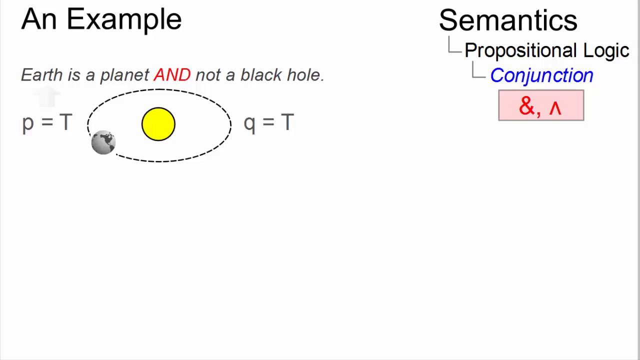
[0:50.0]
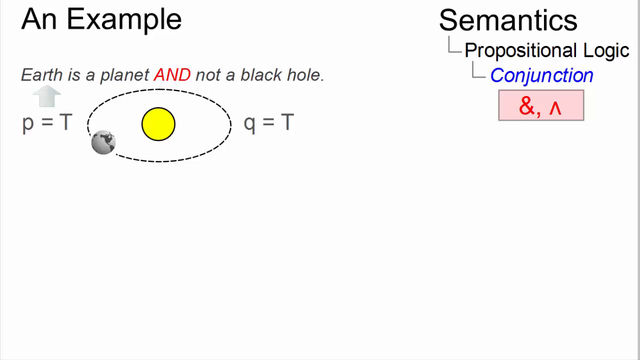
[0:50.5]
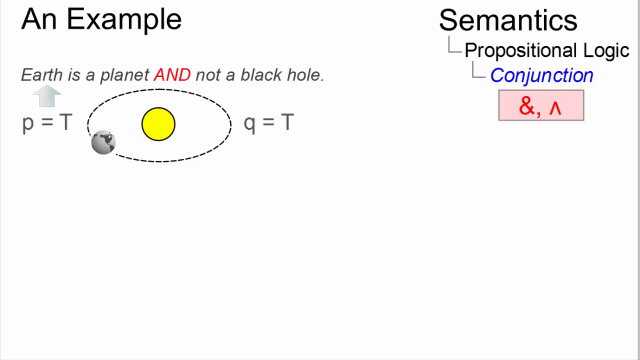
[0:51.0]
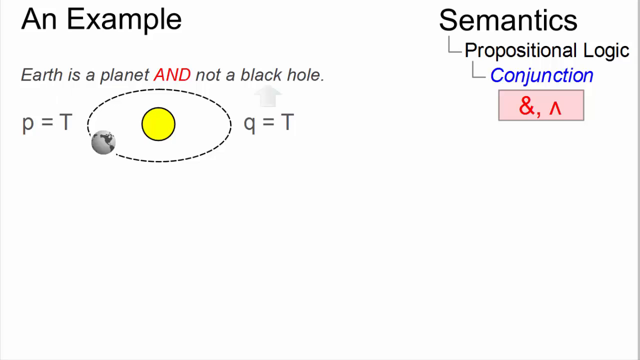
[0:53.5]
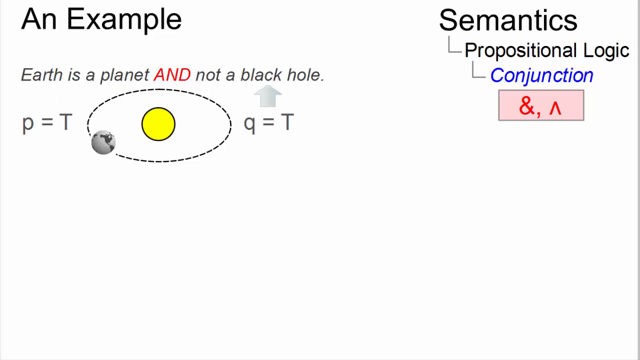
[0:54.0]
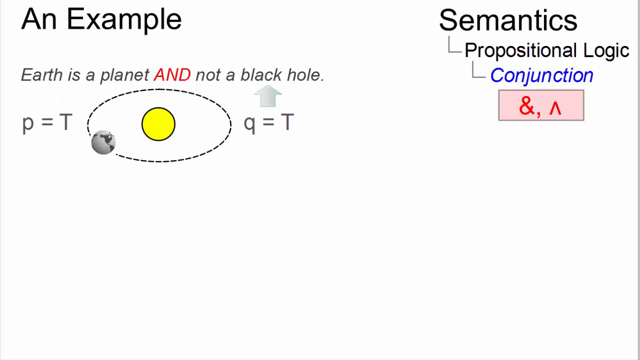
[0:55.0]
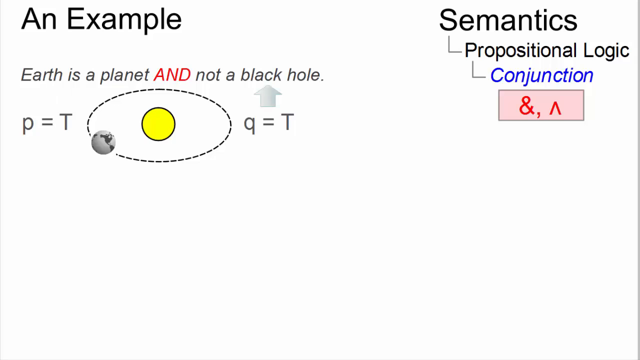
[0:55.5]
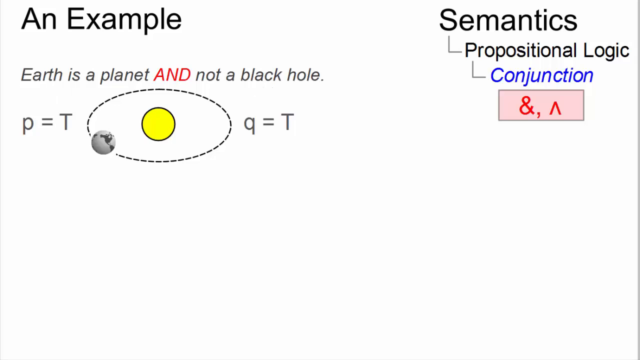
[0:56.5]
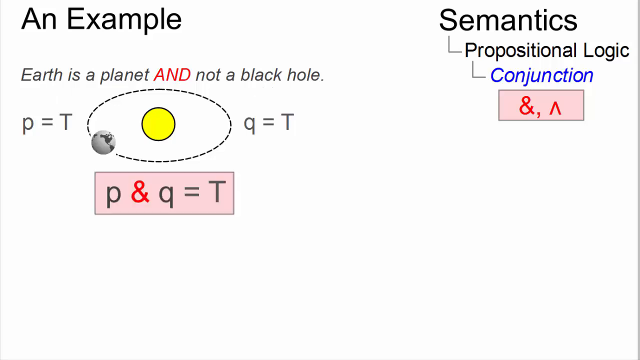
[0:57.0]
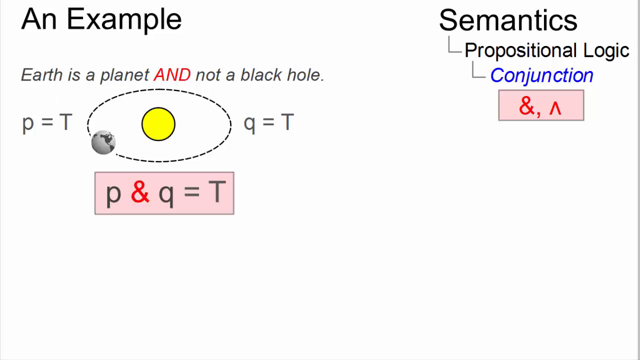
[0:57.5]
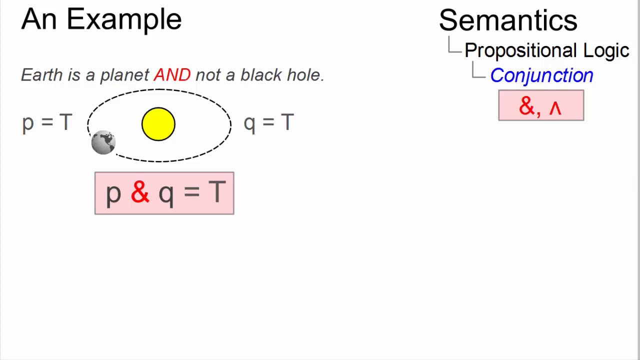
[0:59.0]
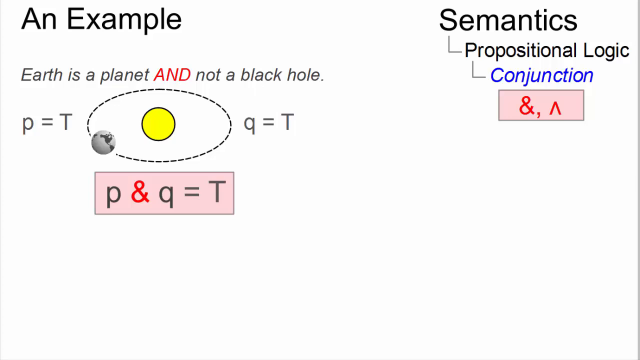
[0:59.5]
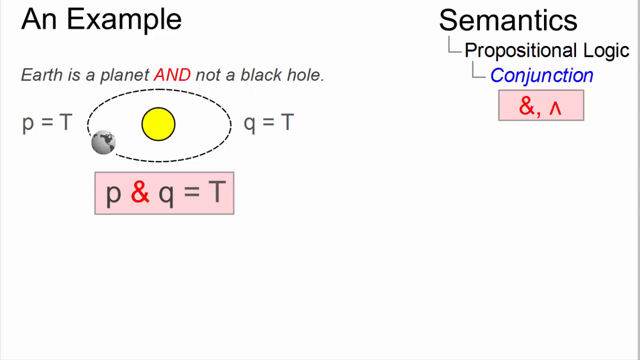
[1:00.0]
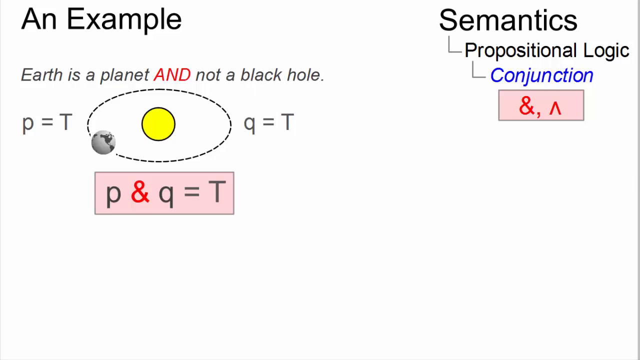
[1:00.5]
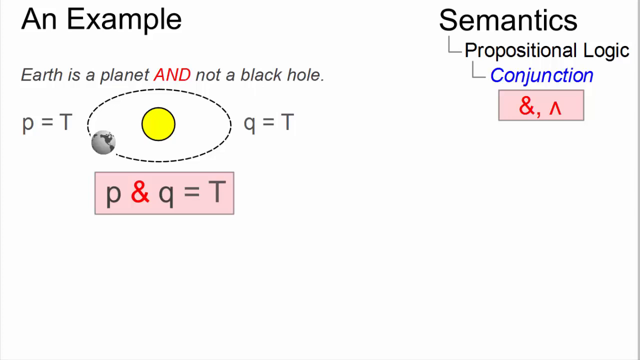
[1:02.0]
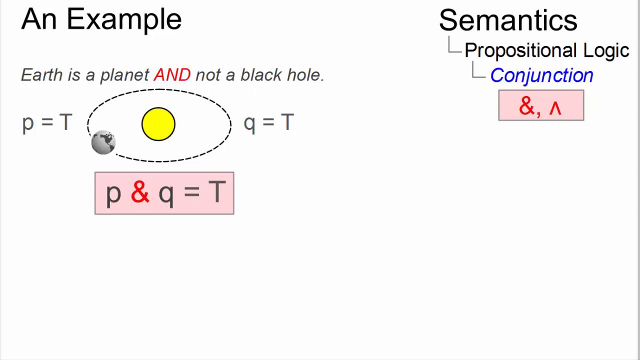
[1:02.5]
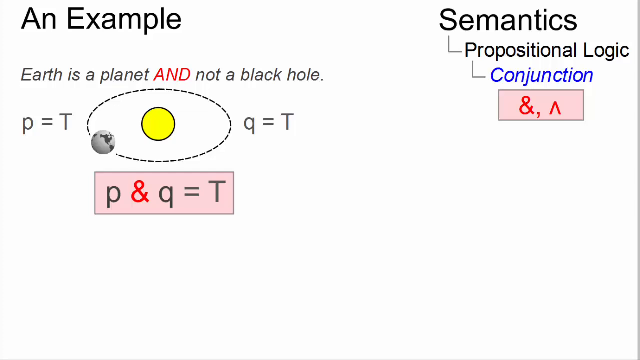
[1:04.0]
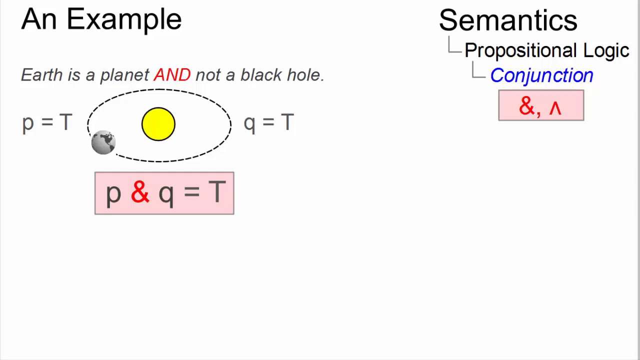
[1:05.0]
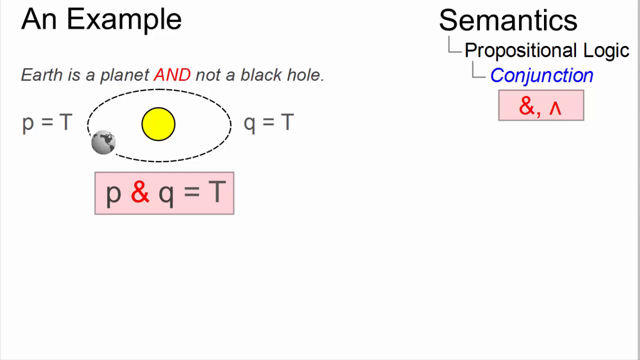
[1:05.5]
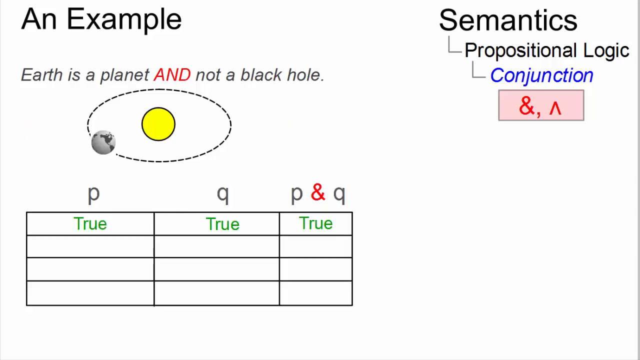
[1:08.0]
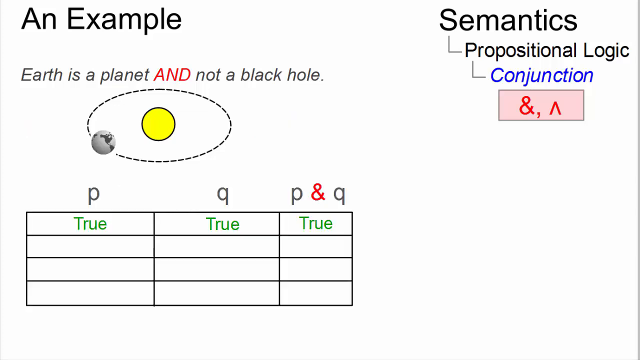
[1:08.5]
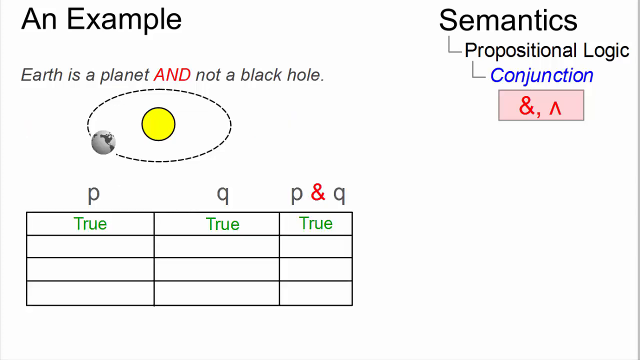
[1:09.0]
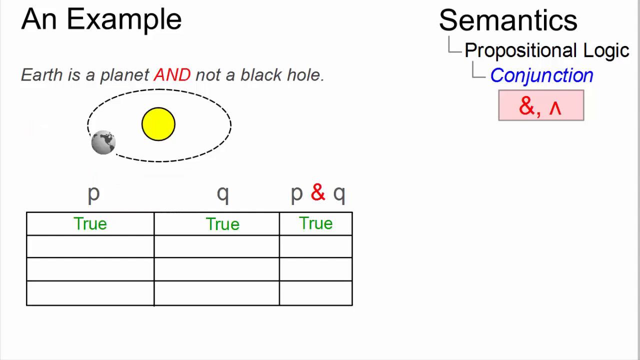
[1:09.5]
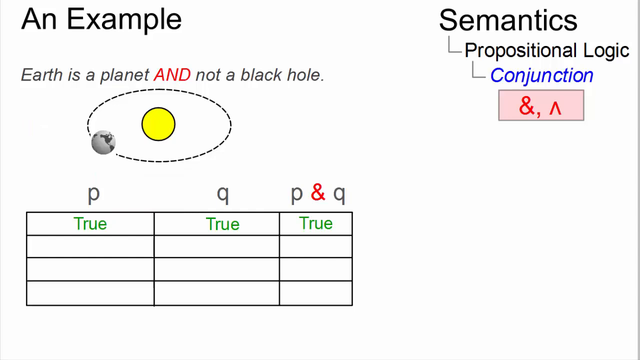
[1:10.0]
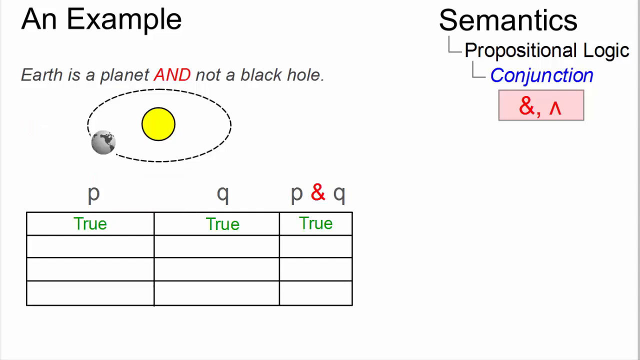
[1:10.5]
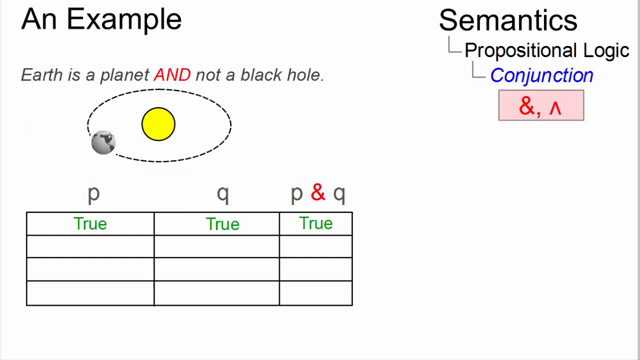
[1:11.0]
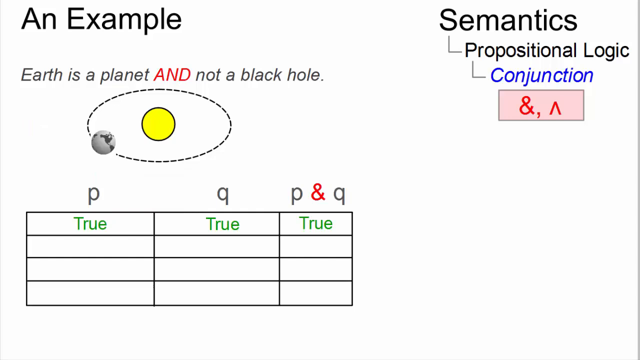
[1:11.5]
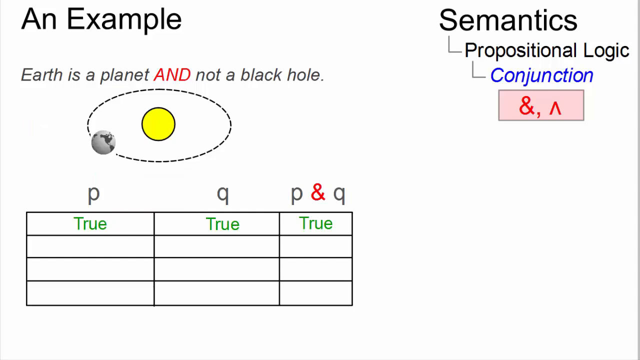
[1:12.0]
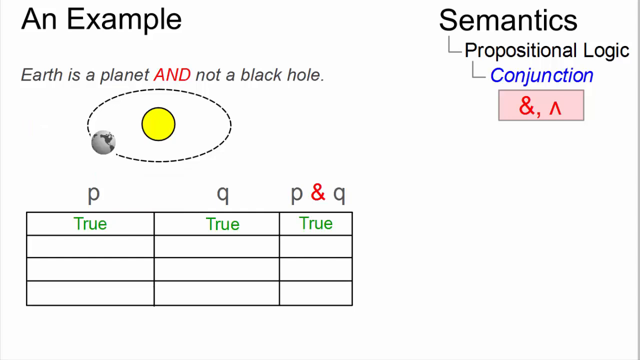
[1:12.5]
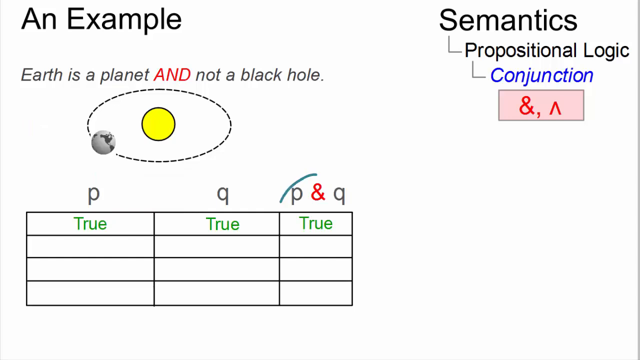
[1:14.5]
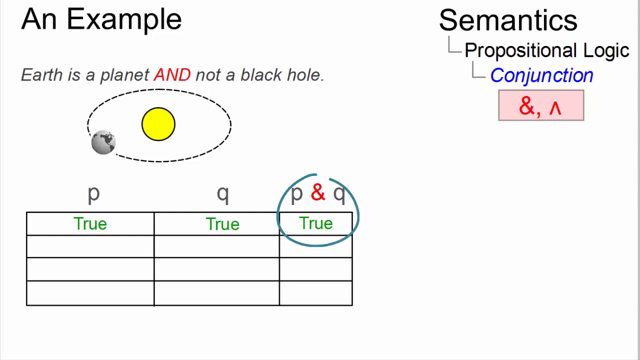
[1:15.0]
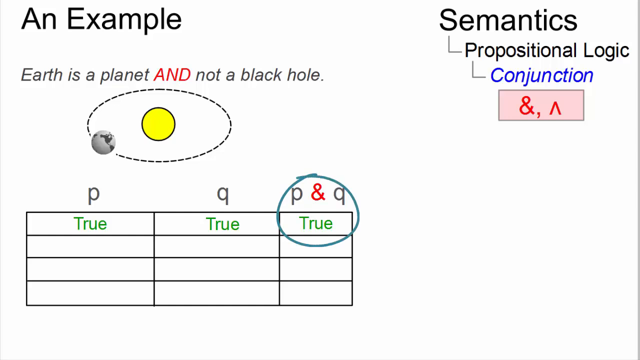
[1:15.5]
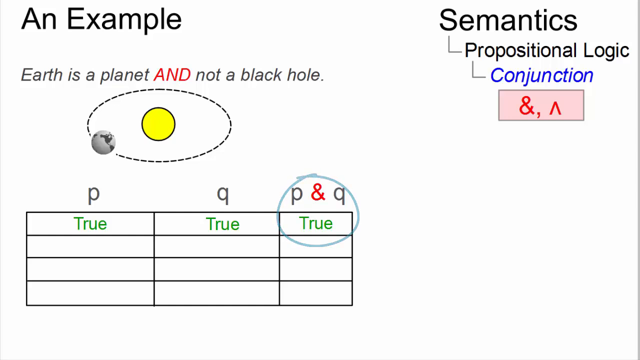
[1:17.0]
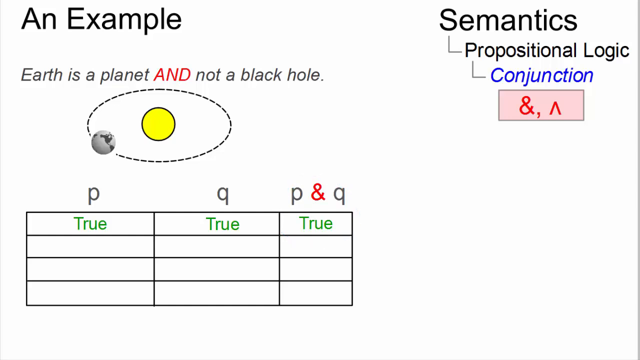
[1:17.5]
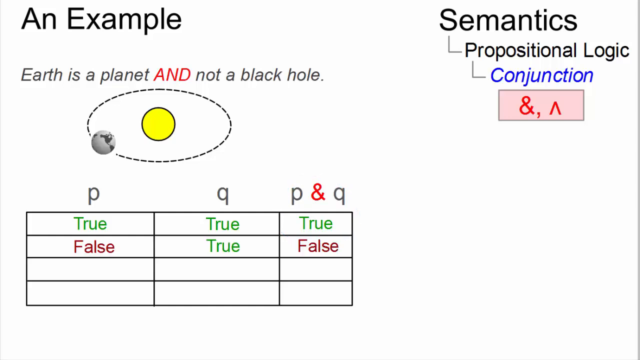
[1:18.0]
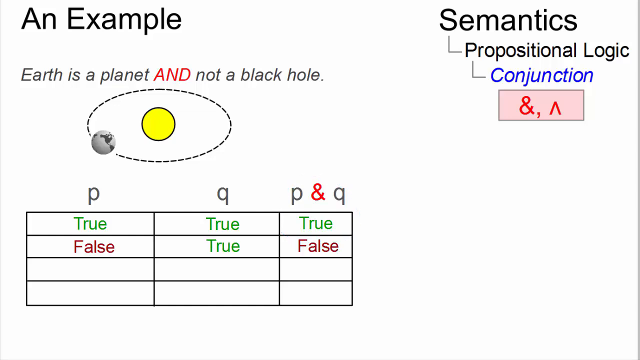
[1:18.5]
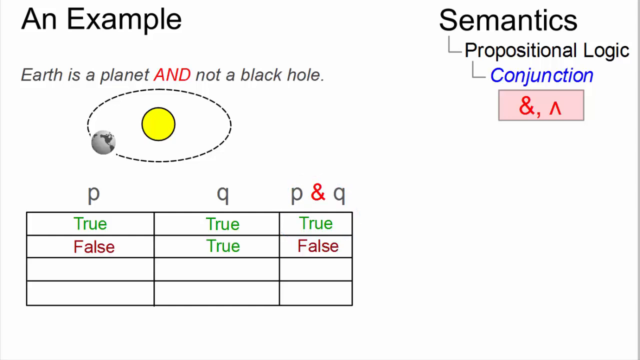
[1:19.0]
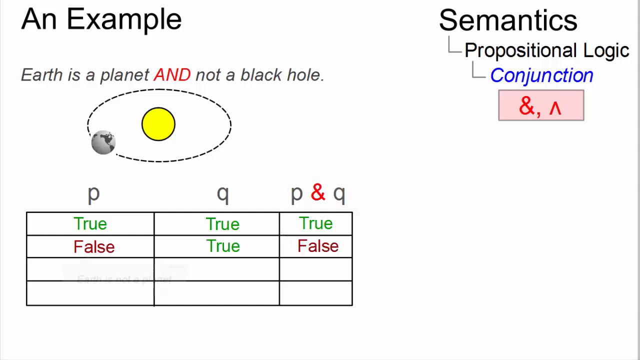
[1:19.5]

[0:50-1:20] The white background fades to gray and then to black at the bottom, about an inch up, and is outlined in dark gray along the right side from the bottom right corner to the top right corner. The example "Earth is a planet and not a black hole" is shown. A bright yellow object depicts the sun, surrounded by a black dotted line depicting Earth's orbit, with a white ball toward the left side. P = T and Q = T are shown, with a white arrow on the right side above the Q and T. Below the yellow dot and the circular dotted line, "P and Q = T" appears in a pink rectangular box, with the and symbol large and bright red. A box then appears with three columns, each column having four boxes.